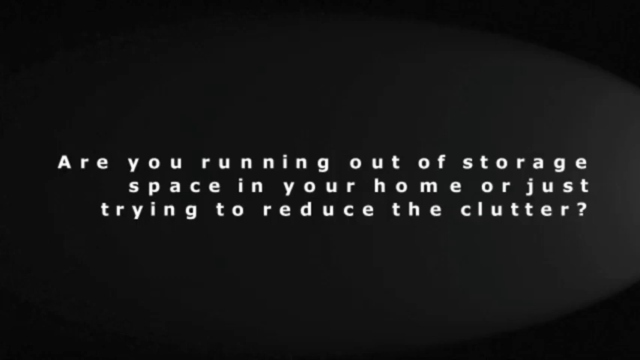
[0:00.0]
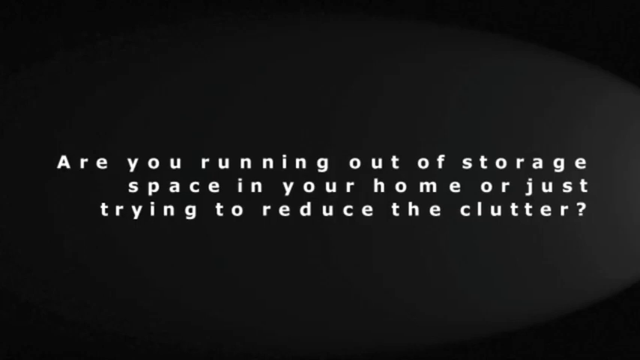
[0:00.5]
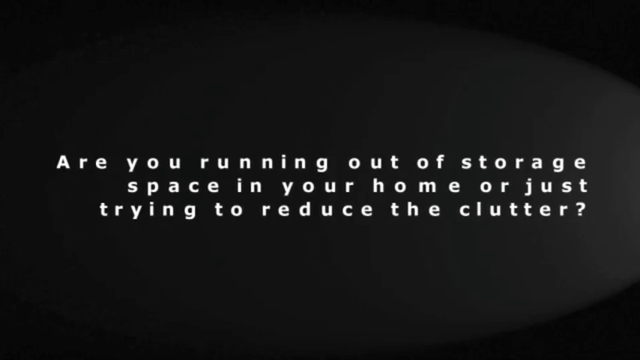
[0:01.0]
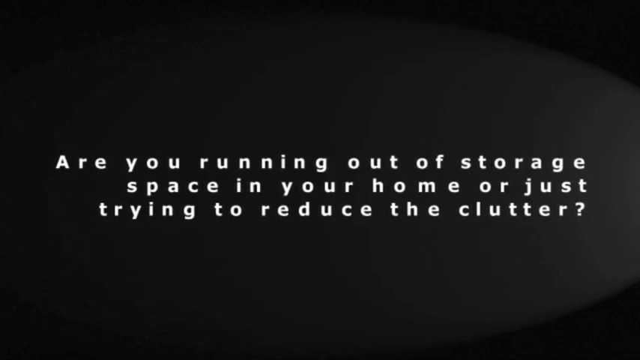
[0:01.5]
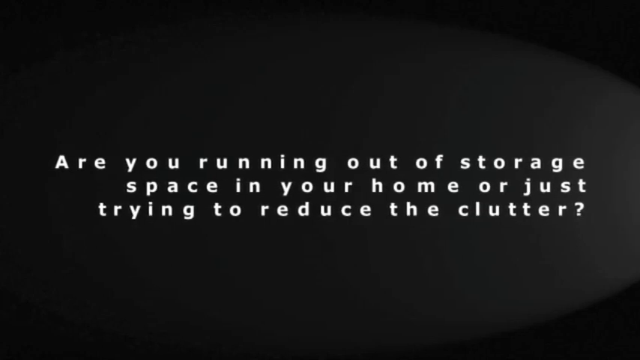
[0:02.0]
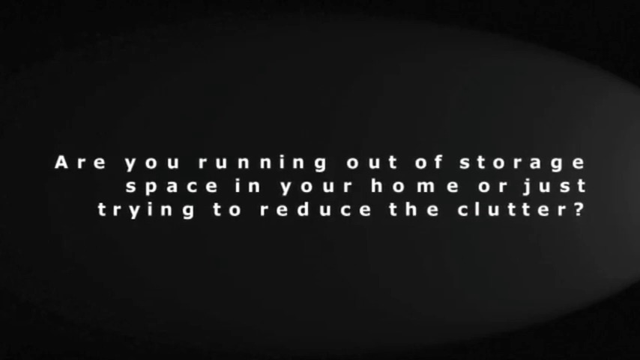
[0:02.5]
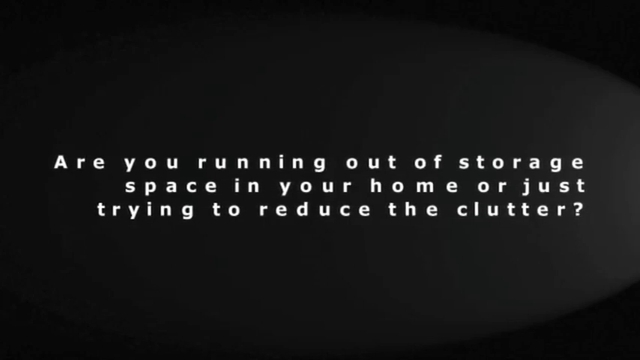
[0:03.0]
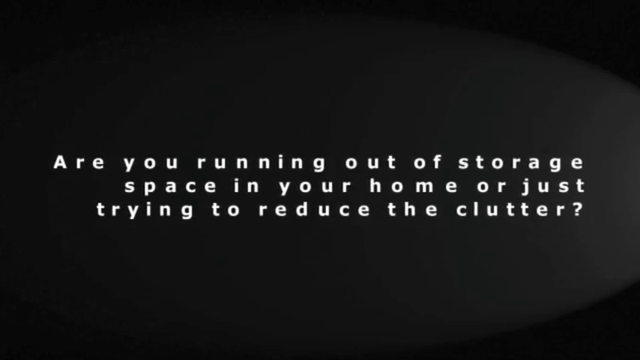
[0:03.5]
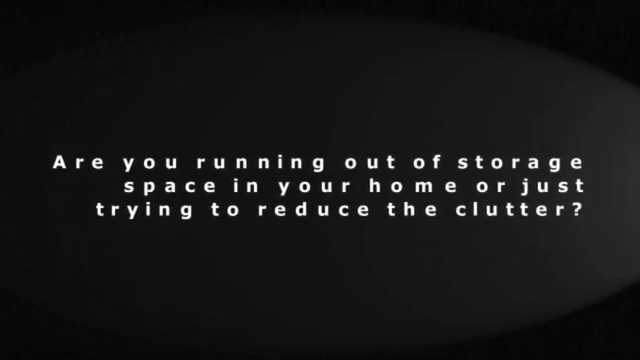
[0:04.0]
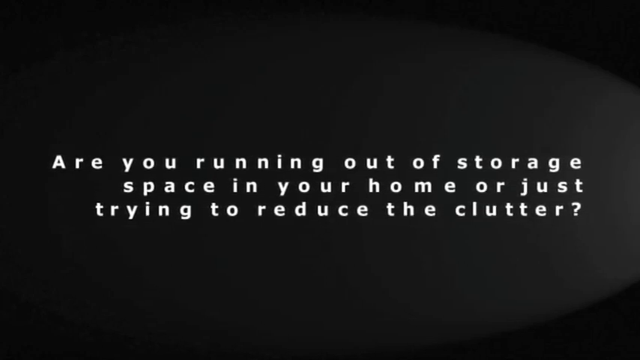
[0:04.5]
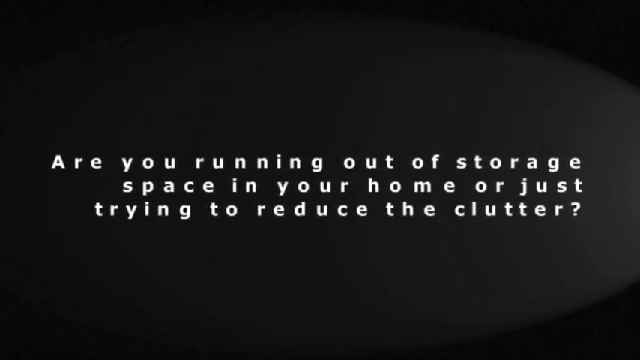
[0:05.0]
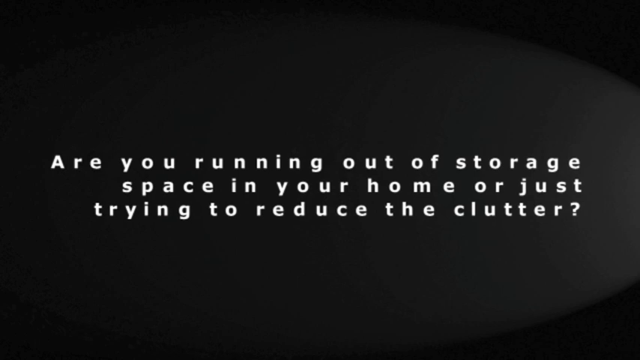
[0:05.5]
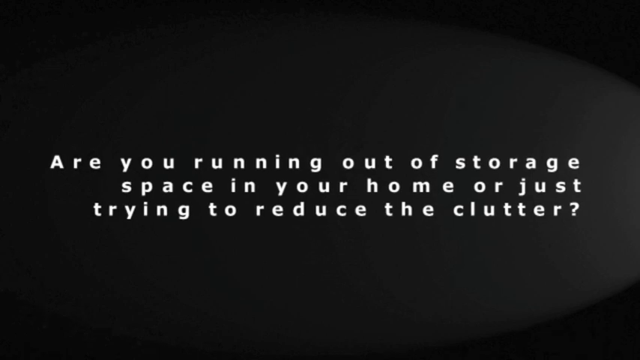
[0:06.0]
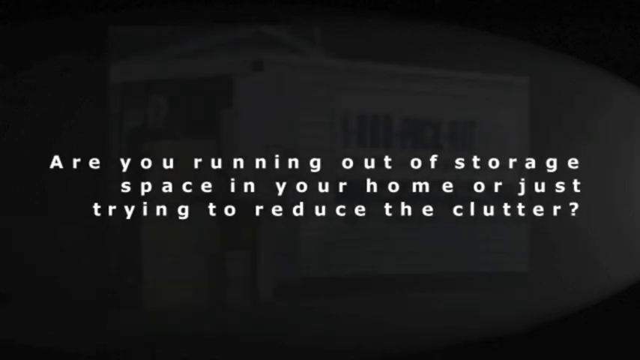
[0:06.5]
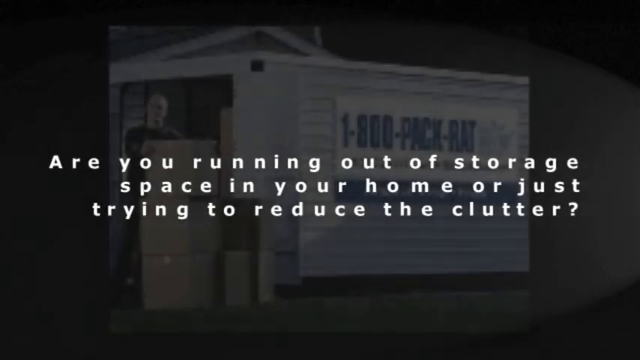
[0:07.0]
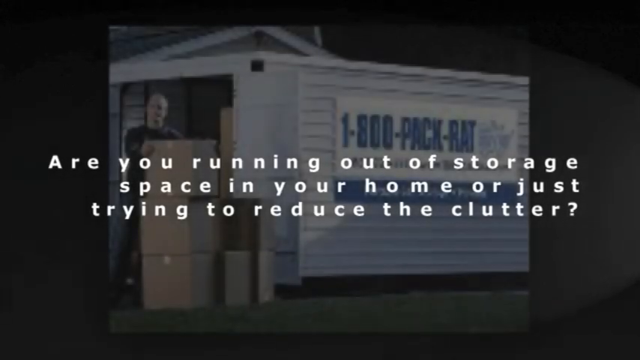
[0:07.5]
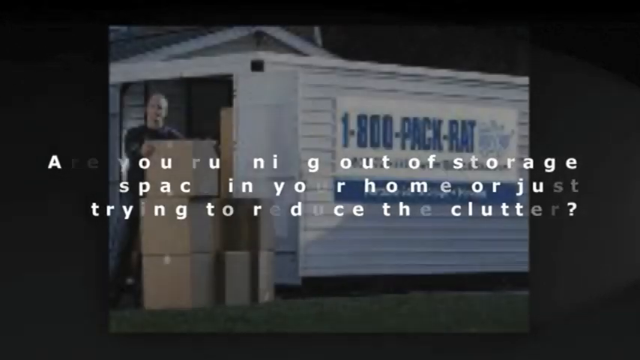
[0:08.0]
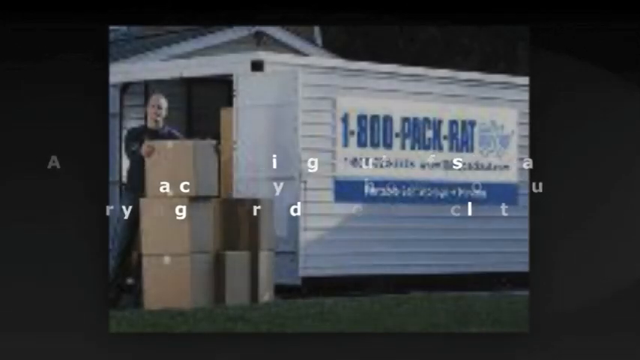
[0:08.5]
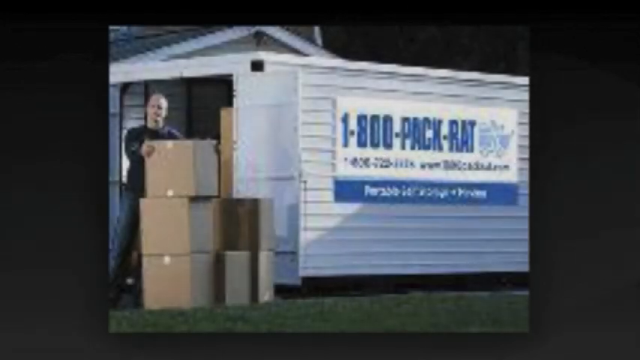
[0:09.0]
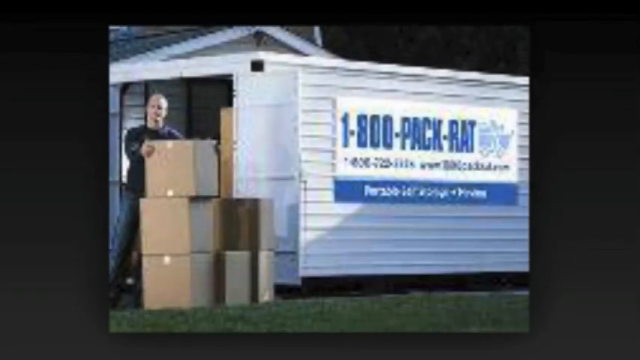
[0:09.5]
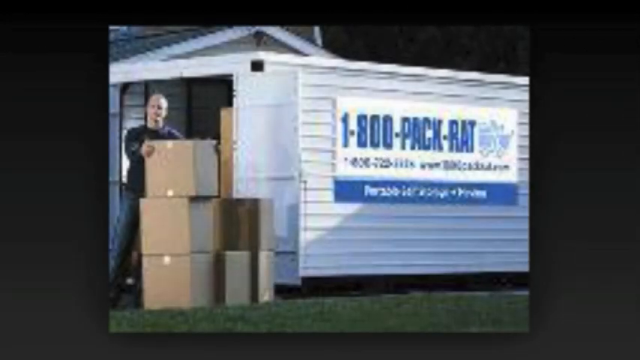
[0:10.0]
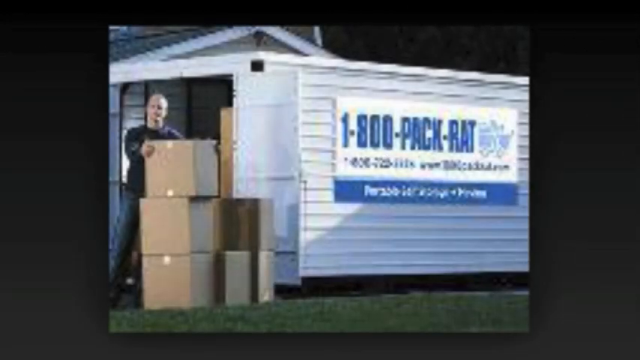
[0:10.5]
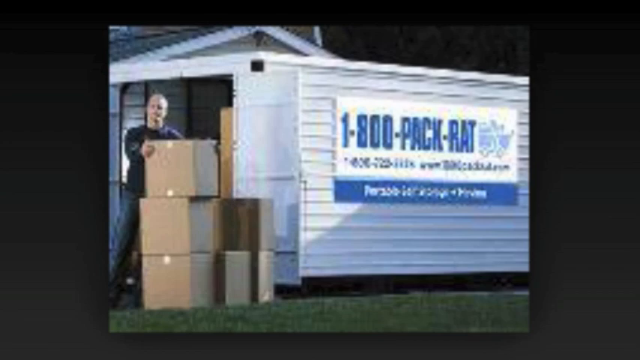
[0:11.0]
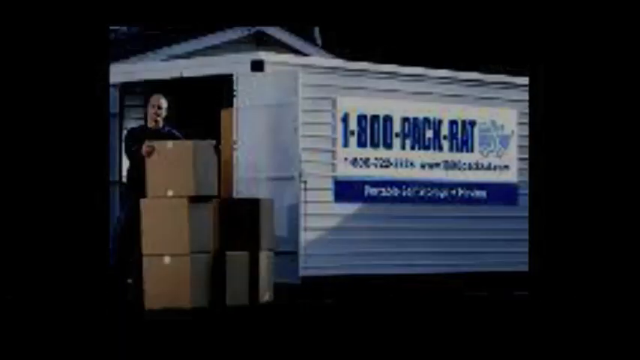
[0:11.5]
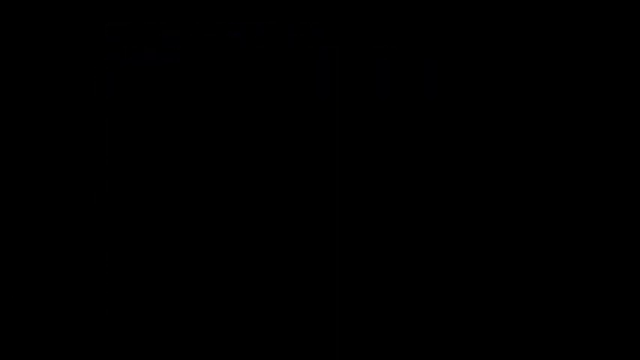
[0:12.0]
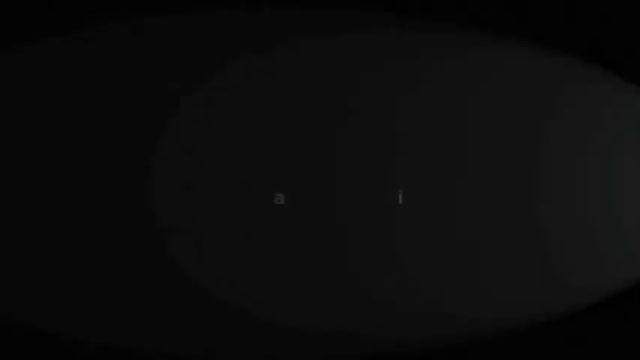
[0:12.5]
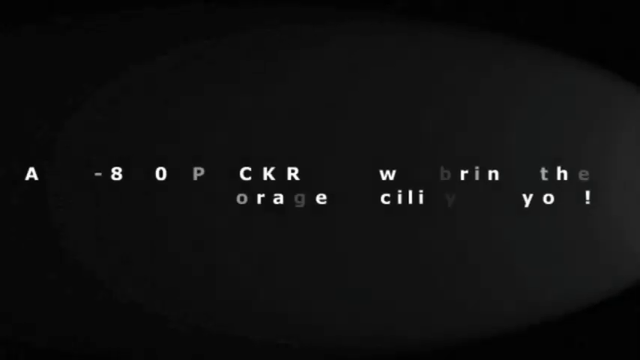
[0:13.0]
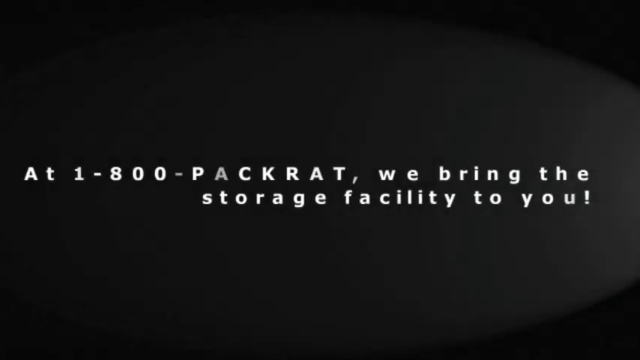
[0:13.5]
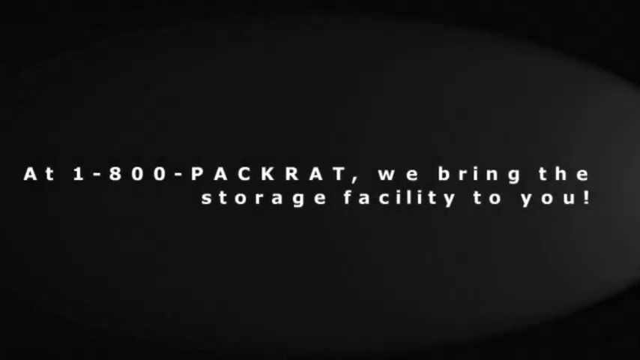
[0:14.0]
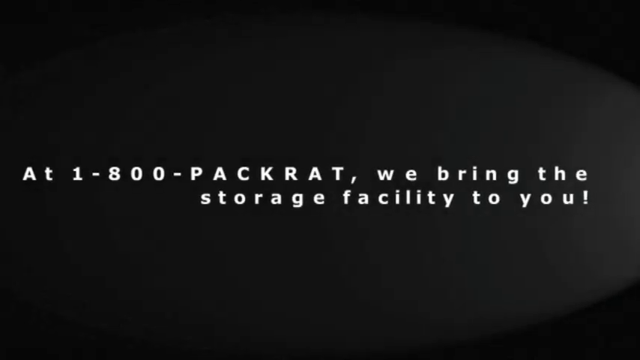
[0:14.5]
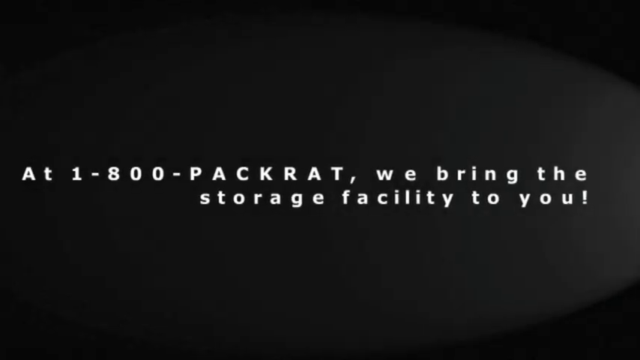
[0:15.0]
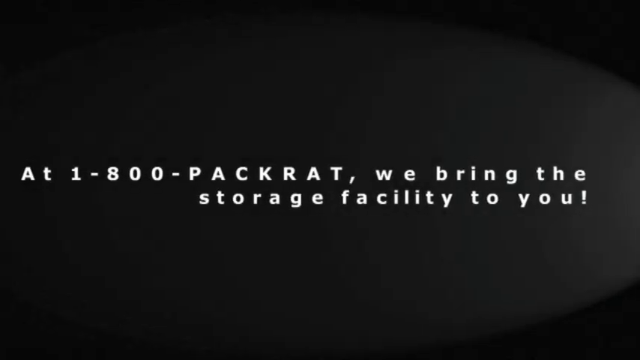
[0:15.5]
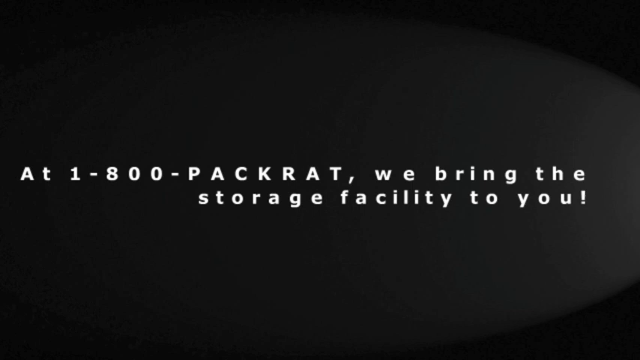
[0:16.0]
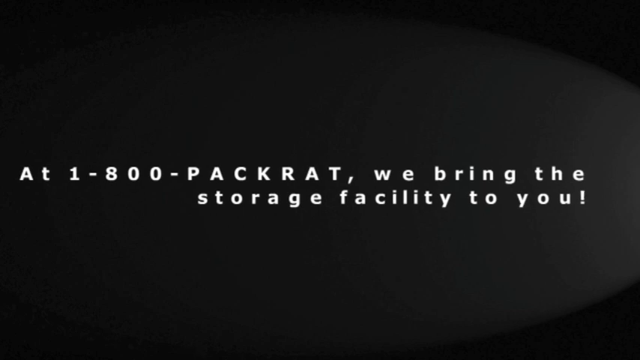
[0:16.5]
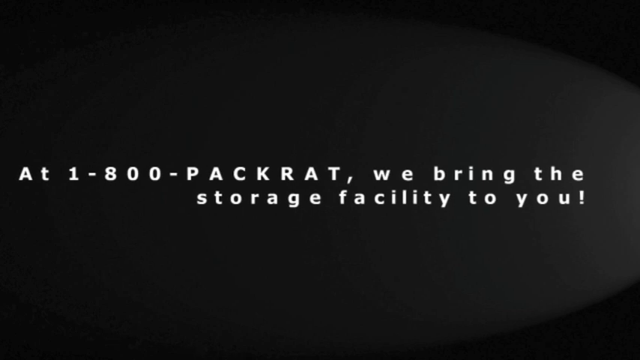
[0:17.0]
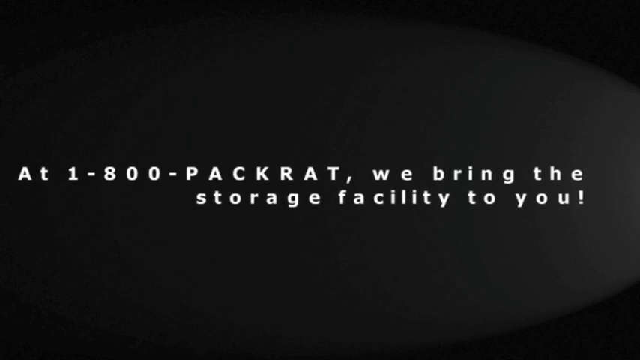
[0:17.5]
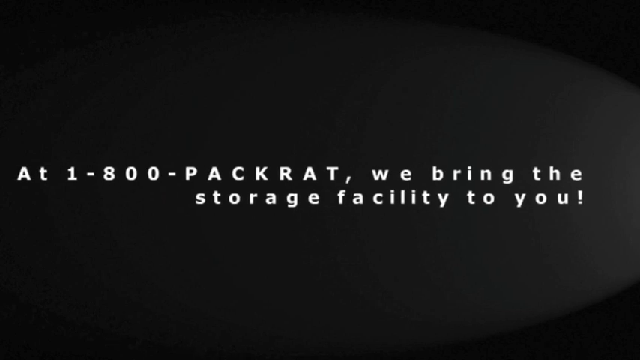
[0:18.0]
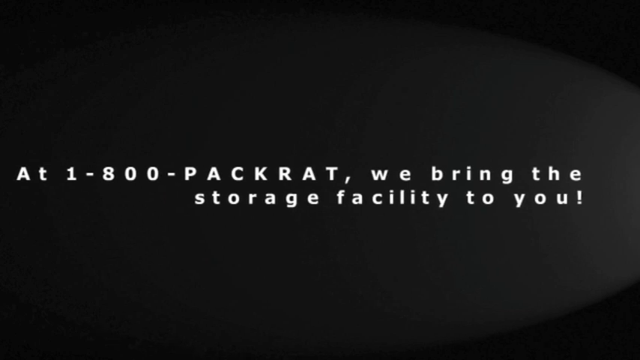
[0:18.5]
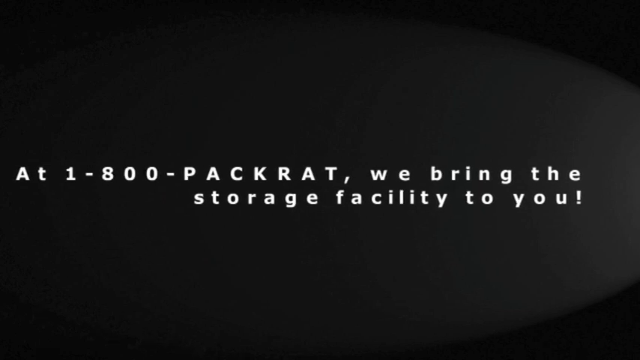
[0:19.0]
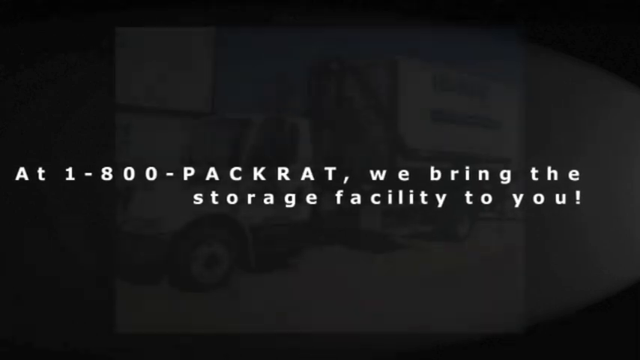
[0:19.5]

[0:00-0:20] The video opens with the question "are you running out of storage space in your home or just trying to reduce the clutter". A generic picture of boxes follows, with the text "1800 pack rat"; the rest of the text on it is too poor to make out. After the picture transitions, text appears that reads "at 1800 pack rat, we bring the storage facility to you".